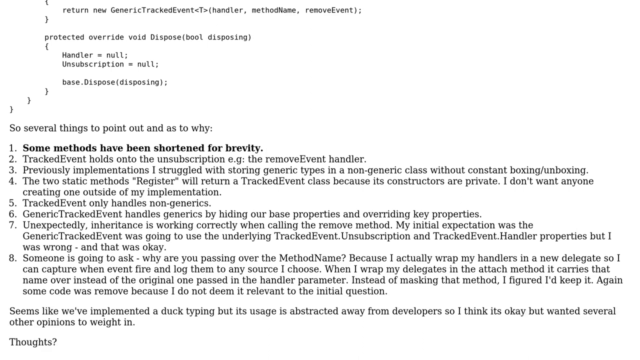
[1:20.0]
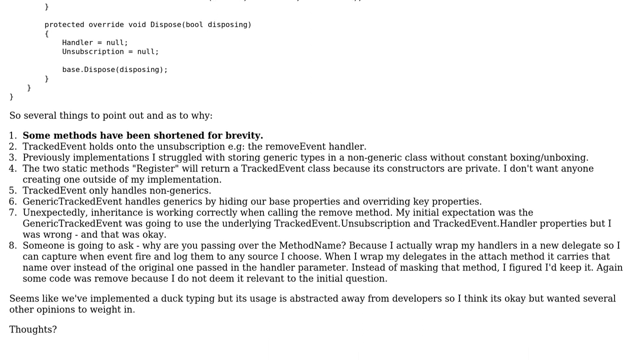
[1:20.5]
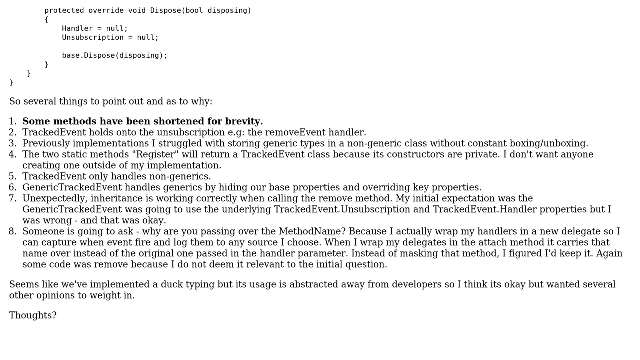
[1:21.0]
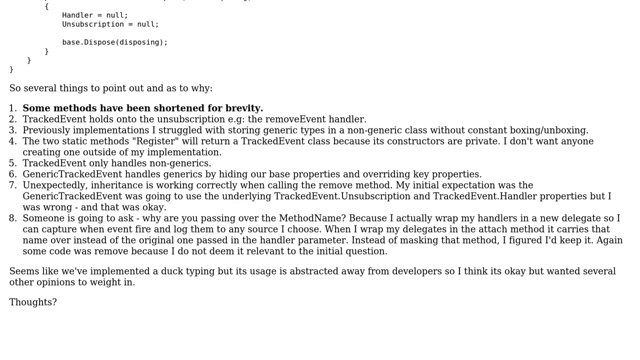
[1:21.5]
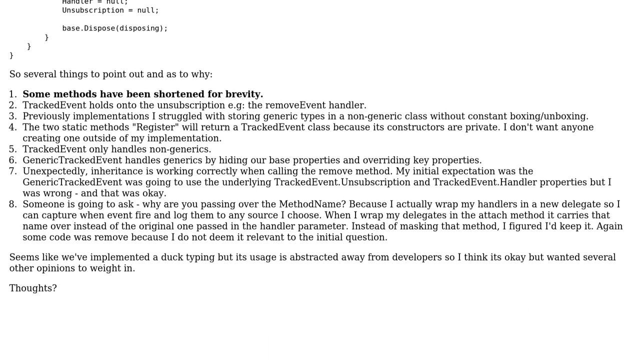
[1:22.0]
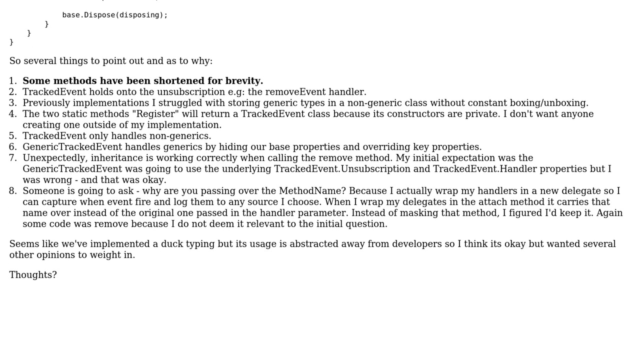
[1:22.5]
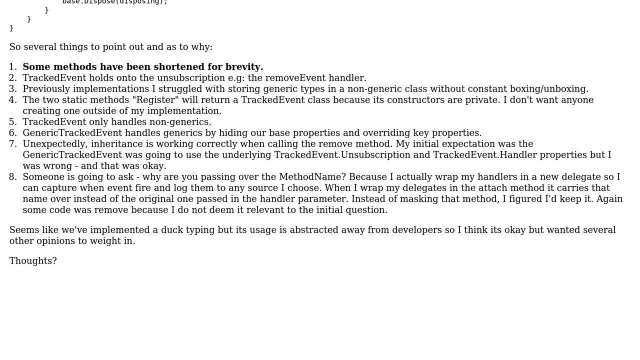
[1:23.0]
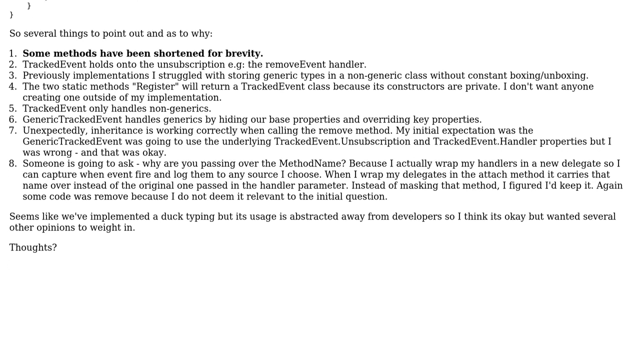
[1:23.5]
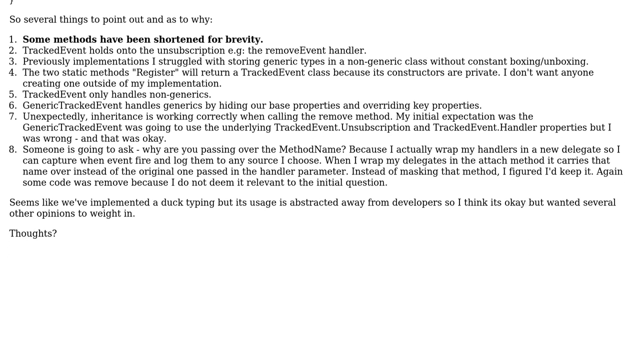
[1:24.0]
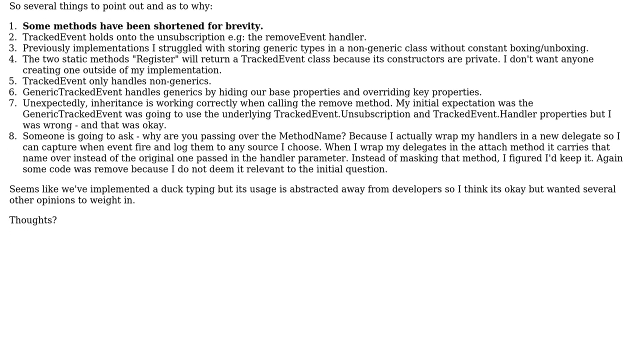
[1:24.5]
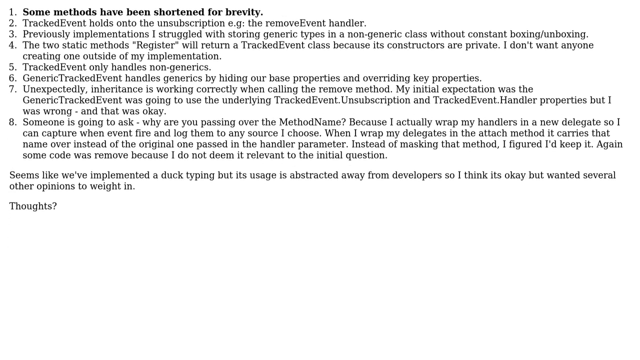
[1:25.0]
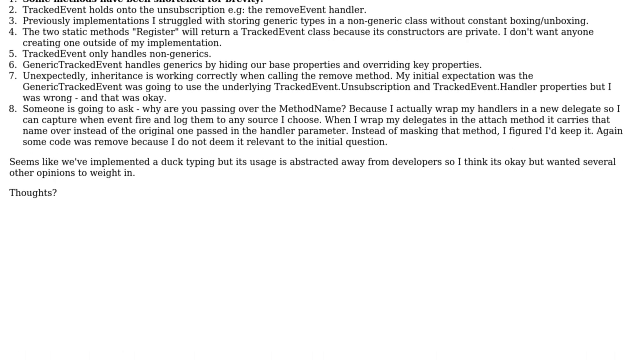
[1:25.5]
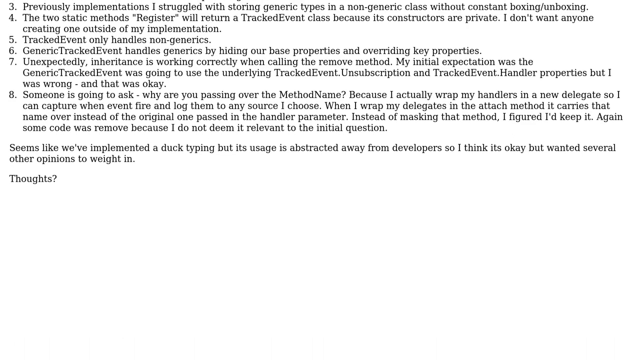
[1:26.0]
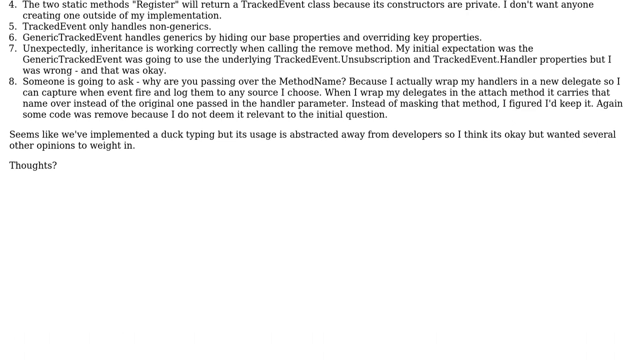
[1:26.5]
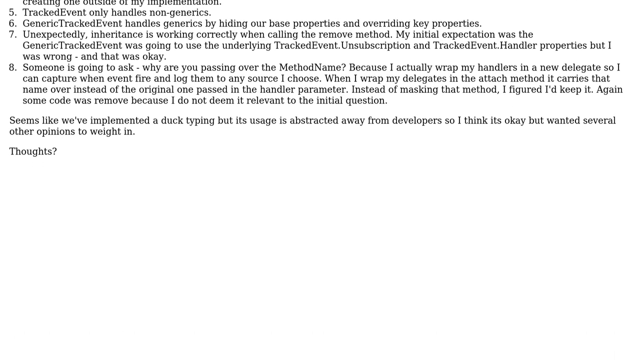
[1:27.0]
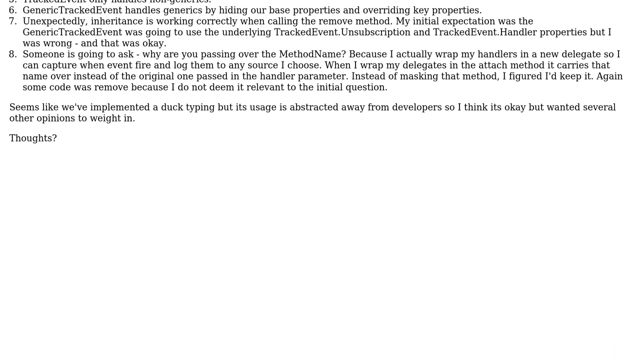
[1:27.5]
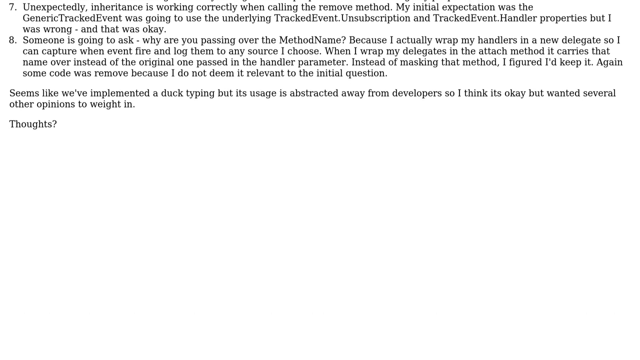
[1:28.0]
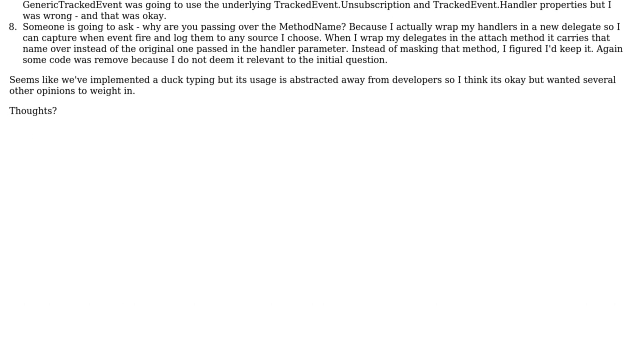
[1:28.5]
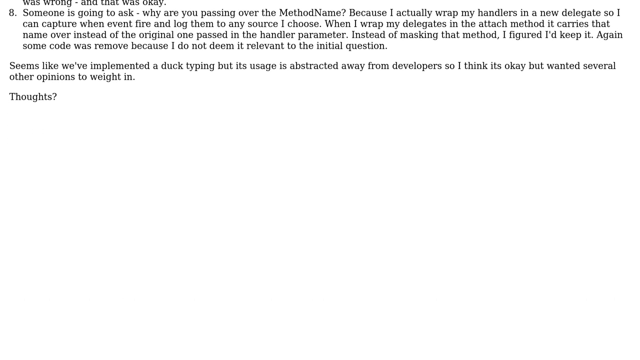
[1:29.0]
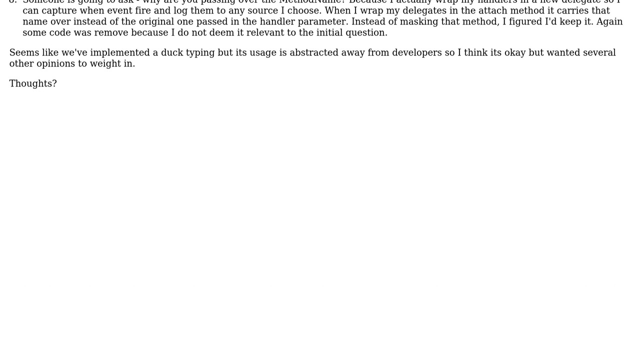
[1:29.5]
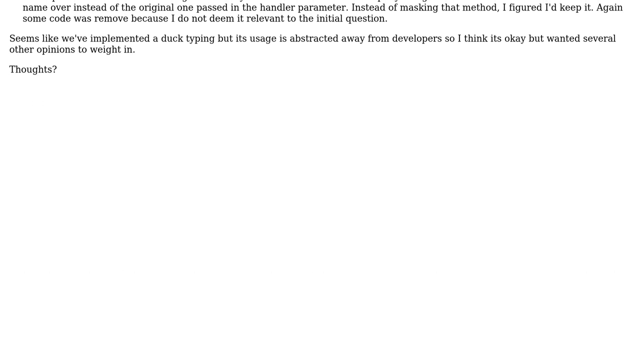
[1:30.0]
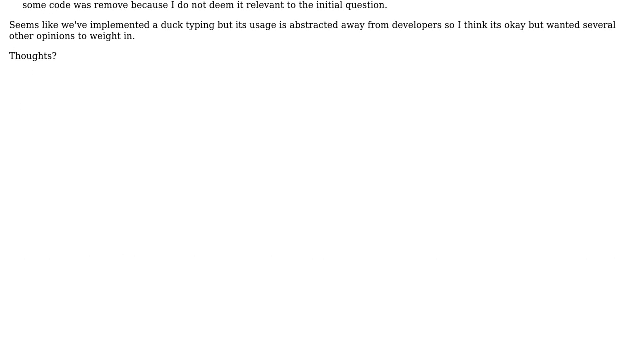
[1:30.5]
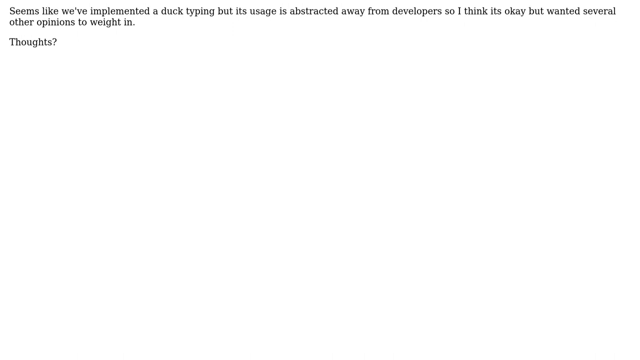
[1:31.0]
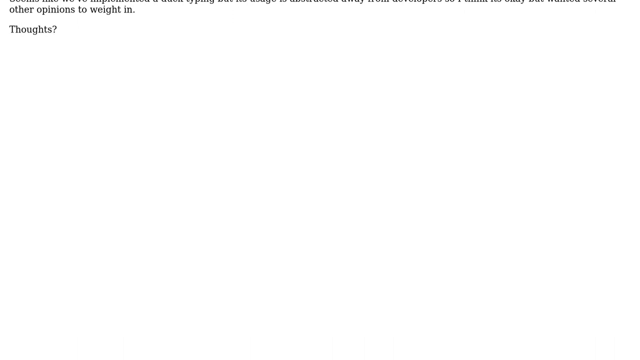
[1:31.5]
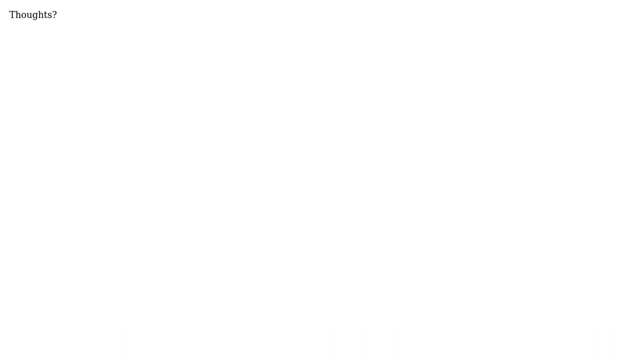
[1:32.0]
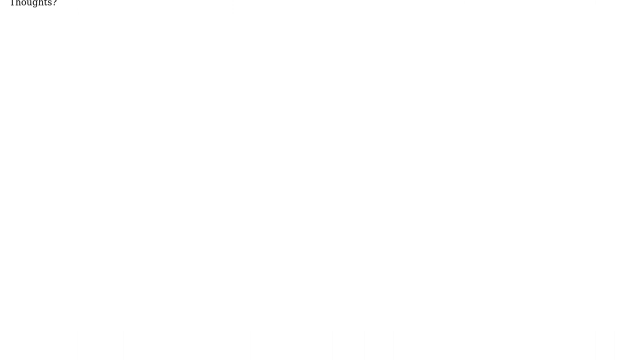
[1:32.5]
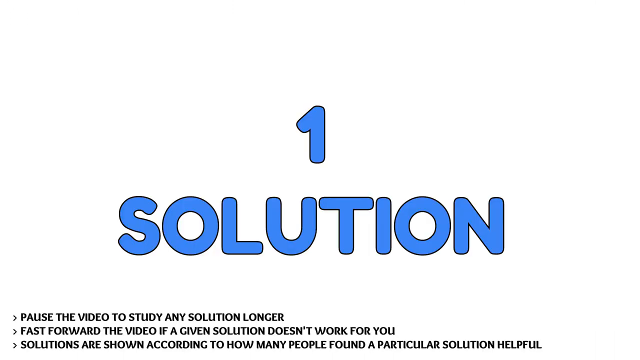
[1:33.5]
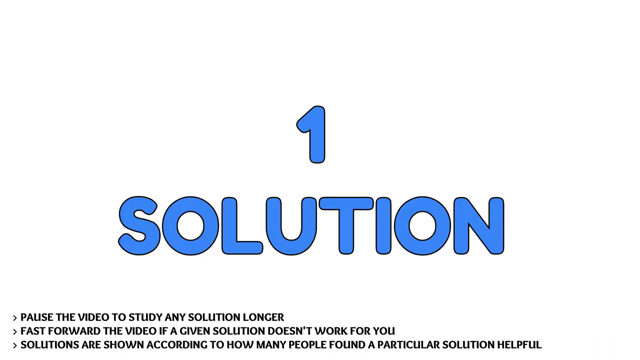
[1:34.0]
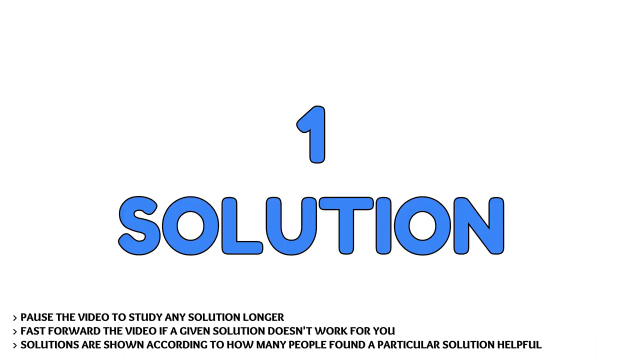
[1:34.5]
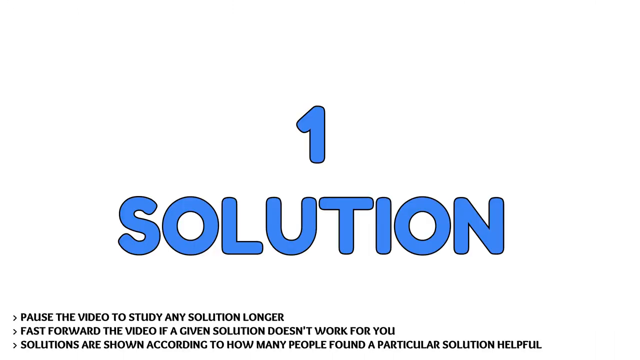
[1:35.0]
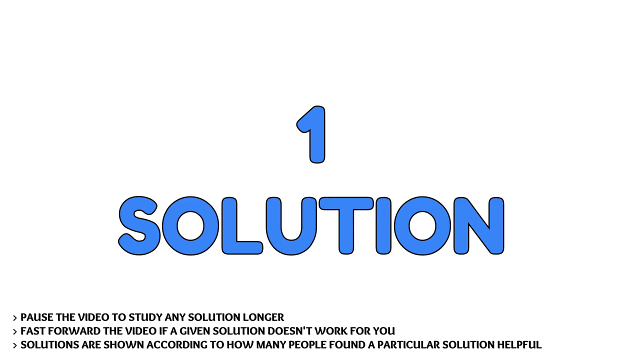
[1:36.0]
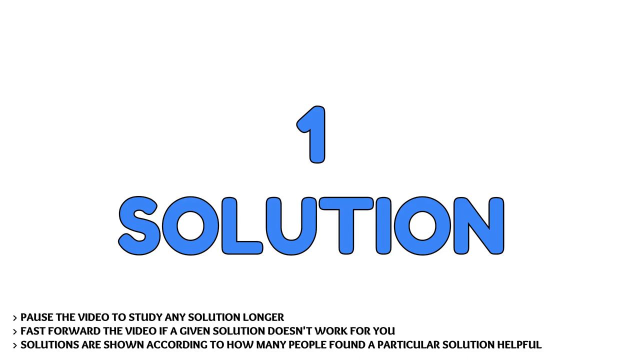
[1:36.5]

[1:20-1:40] A white background with very small black writing, apparently about a size 10 font, scrolls down to the end of the page. The view then pans to an all-white screen with a blue bubble-letter number 1 in the middle and, beneath it, blue bubble letters that say "solution." Underneath that, black text says "pause the video to study any solution longer fast forward the video if a given solution does not work for you." At the very bottom, touching the bottom edge of the screen and a little difficult to read, small writing says "solutions are shown according to how many people found a particular solution helpful." The backgrounds of both screens are white with no color, and the writing under the blue lettering is bolder than the writing on the first page.